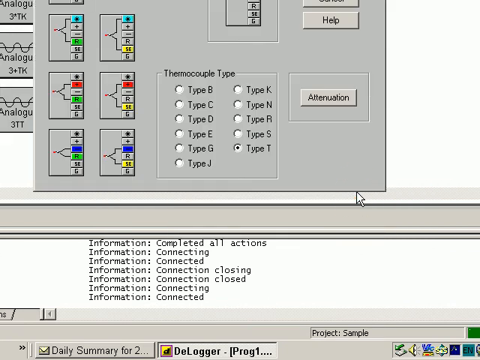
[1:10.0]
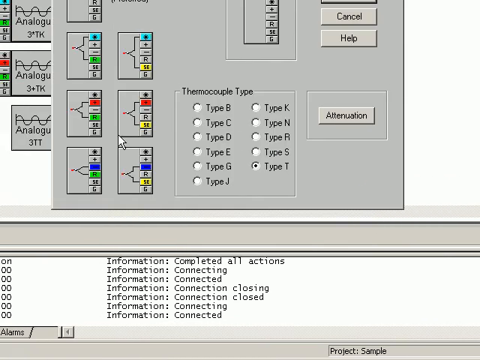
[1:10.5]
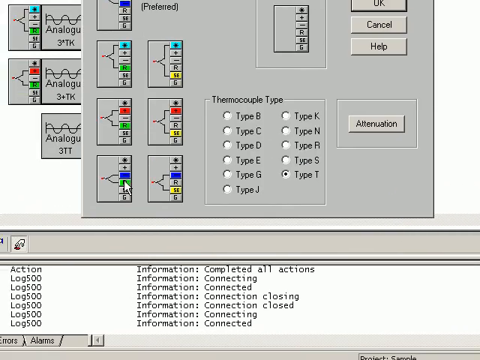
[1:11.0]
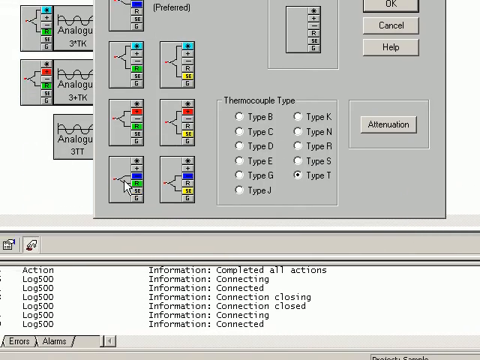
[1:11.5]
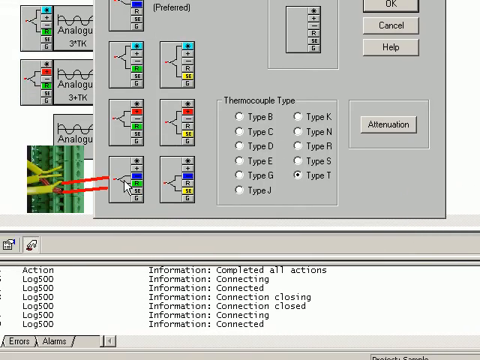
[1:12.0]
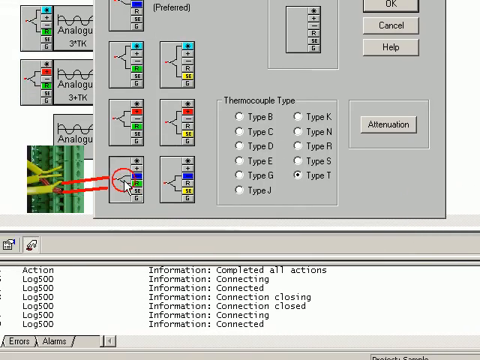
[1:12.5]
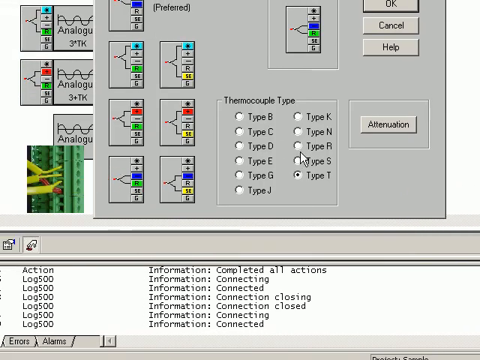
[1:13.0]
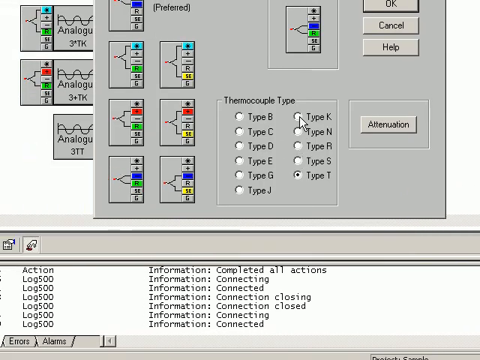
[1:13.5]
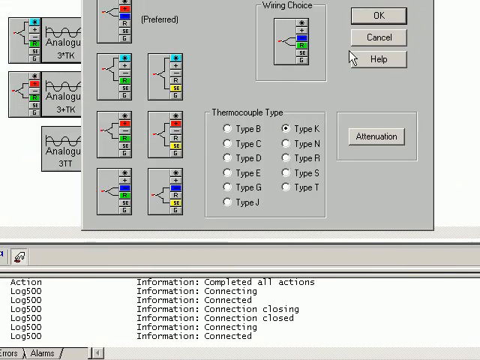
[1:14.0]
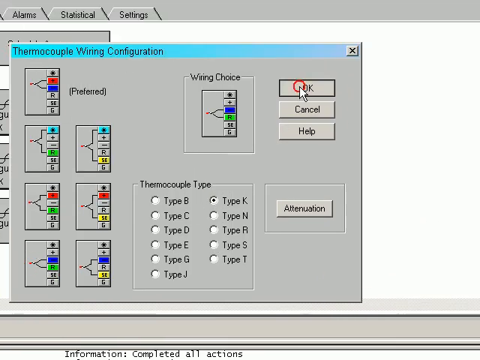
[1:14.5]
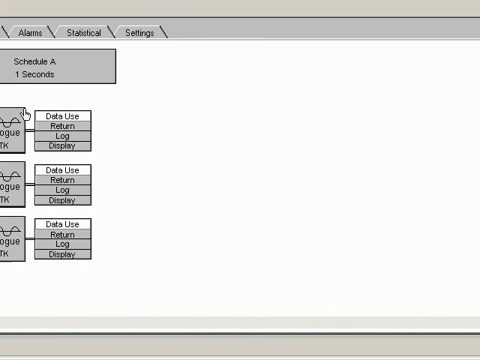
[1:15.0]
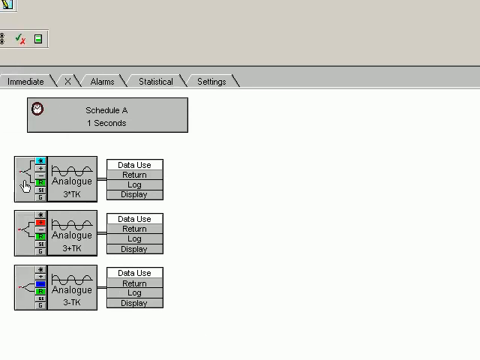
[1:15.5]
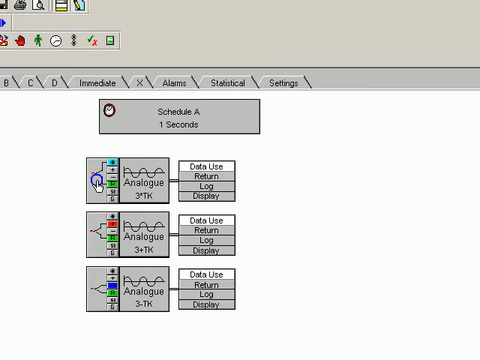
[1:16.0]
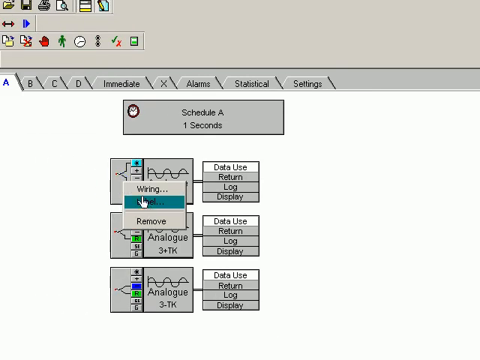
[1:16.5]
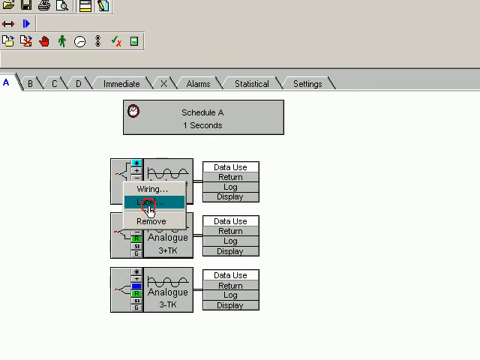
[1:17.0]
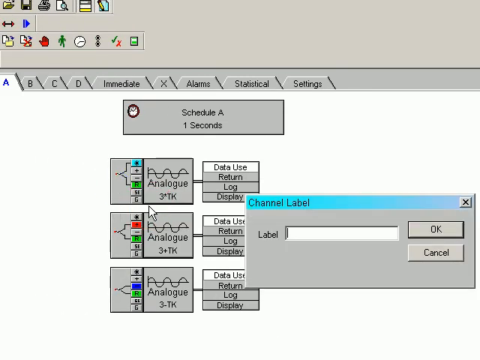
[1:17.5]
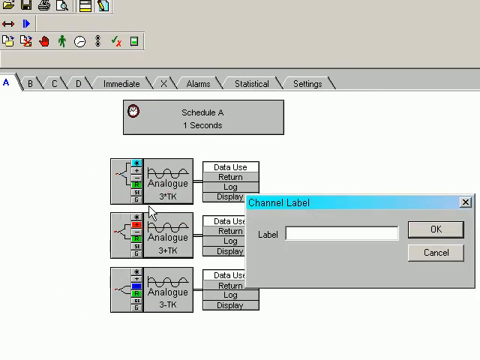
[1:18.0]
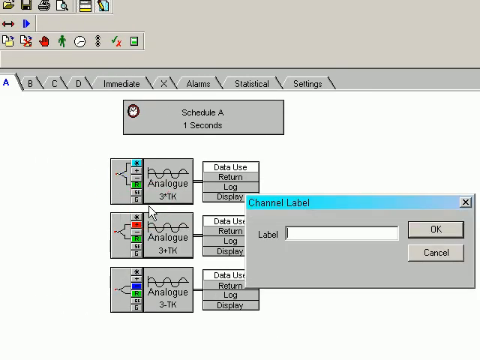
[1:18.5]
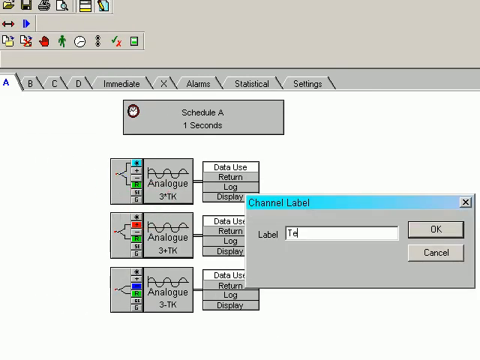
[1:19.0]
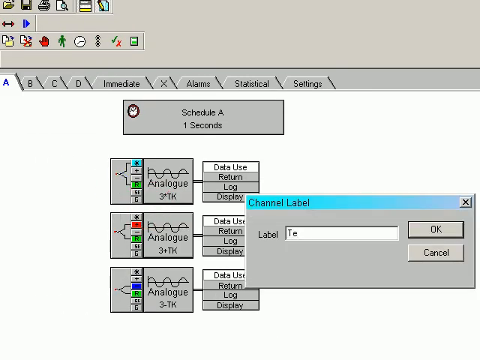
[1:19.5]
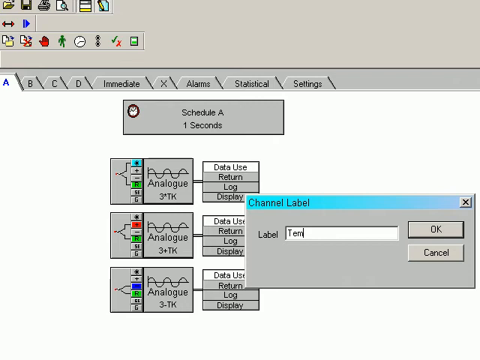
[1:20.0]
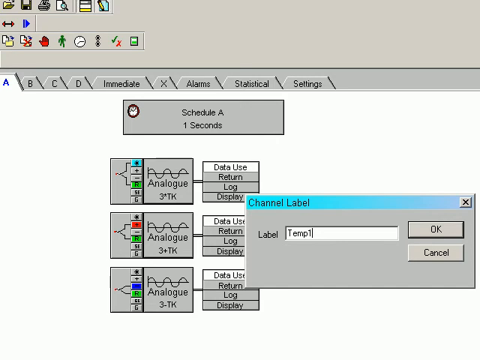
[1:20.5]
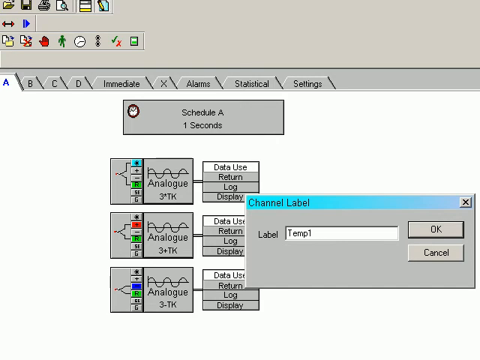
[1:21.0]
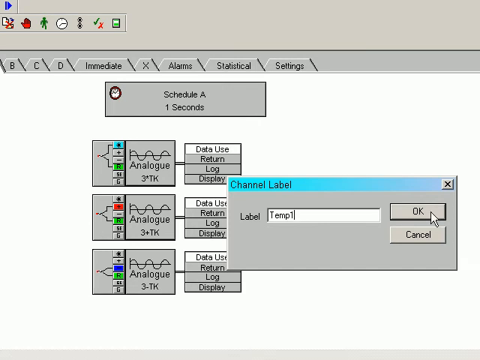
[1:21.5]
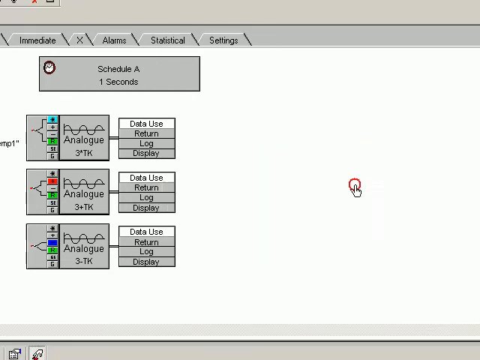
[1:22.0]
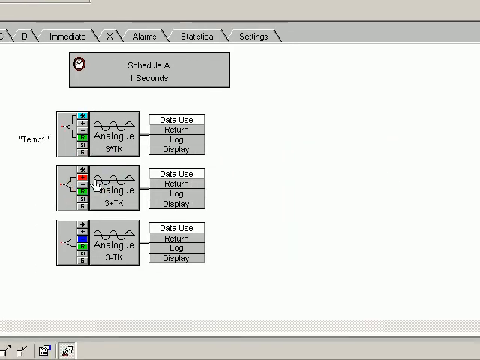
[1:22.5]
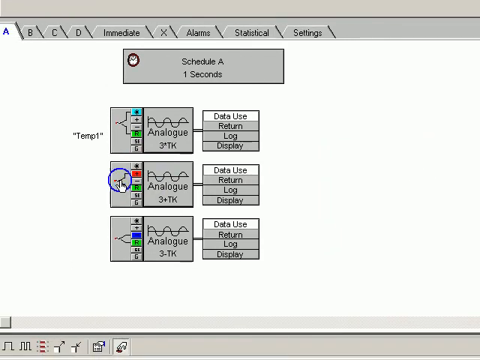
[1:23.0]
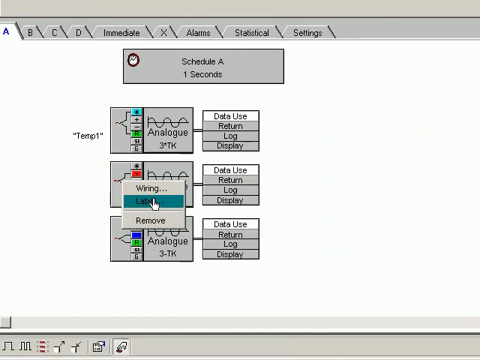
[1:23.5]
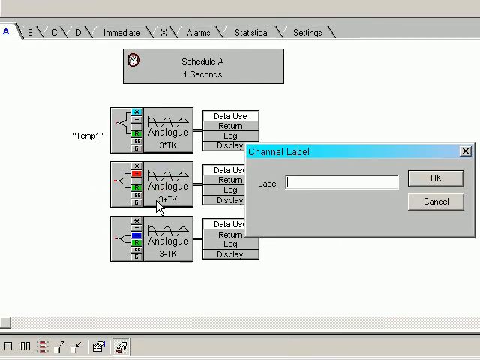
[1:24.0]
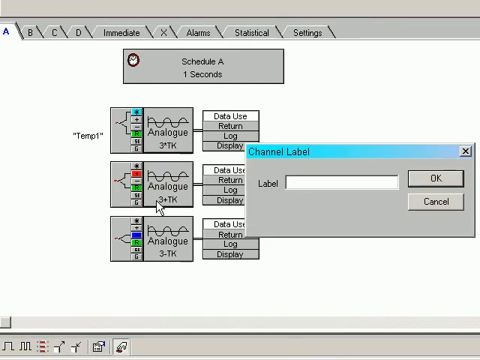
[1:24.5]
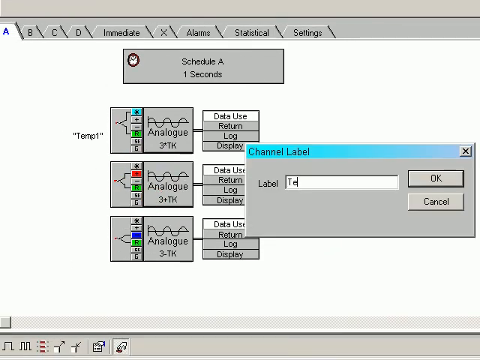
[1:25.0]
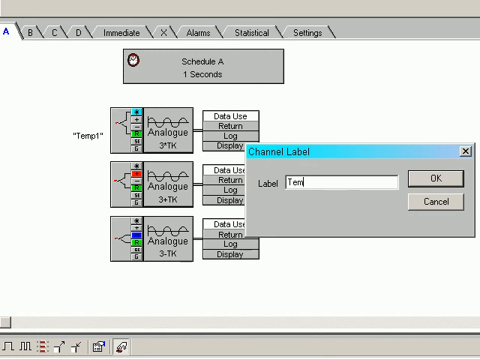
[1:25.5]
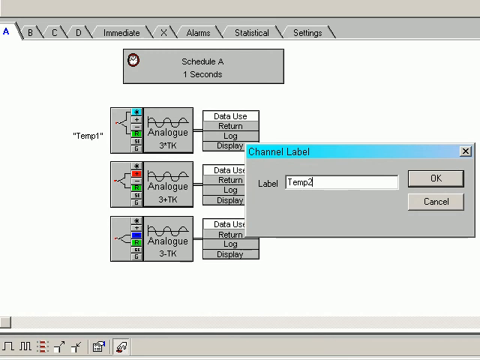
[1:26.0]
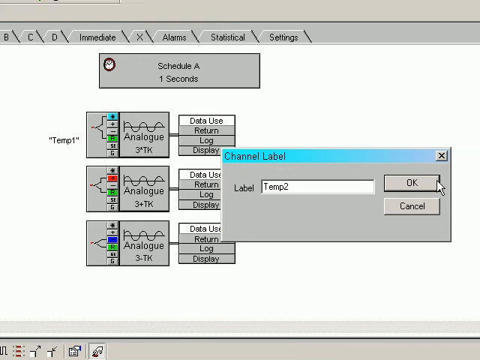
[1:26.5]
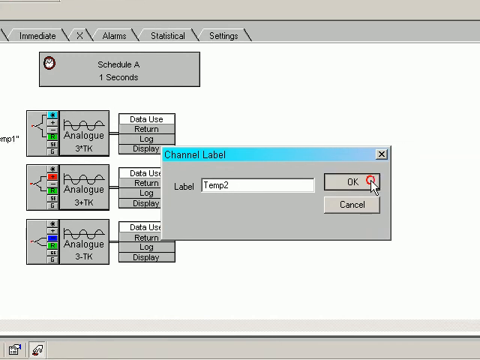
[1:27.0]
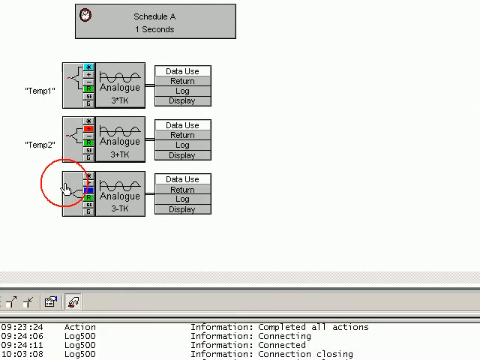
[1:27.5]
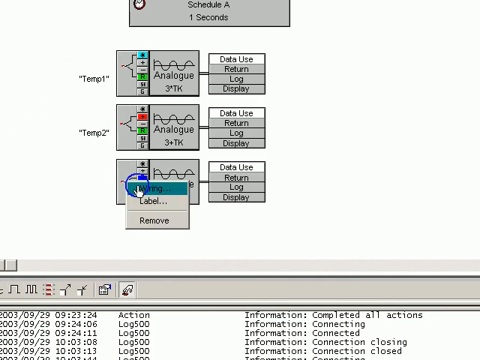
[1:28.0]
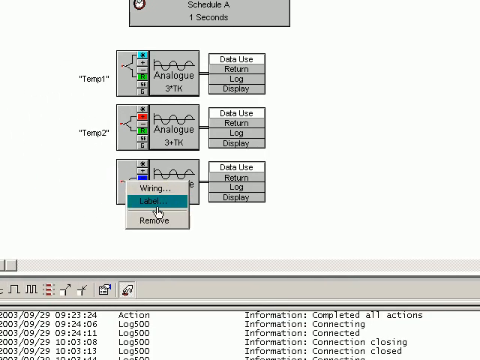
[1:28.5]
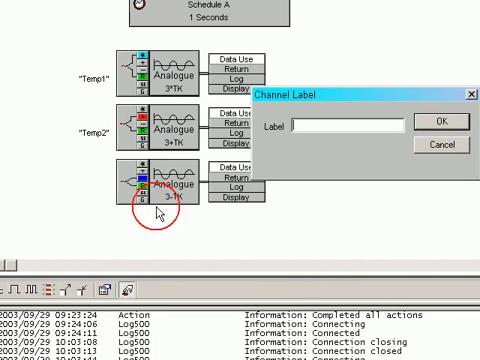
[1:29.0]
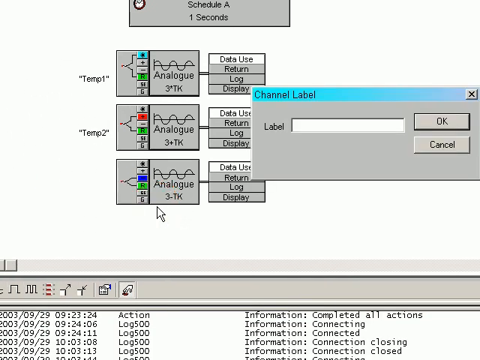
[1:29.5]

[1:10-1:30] The third row schematic is selected, and an image appears of the wire connecting with the red line. Type K is clicked, then OK, and there are now three different schematics. The first one is right-clicked, and from the menu "label..." is clicked. A pop-up appears for typing a label; "temp one" is typed and OK is clicked, and "temp one" in quotation marks shows up to the left of the schematic. The same is done for the second one: "temp two" is typed as the label, OK is clicked, and temp two shows up on the left side. The A tab is the current tab; there are also B, C and D tabs, an immediate tab, an X tab, an alarms tab, a statistical tab and a settings tab. At the top are several icons: a clock, a check and an X, a green man who looks like he is running, a blue arrow, and a red hand.